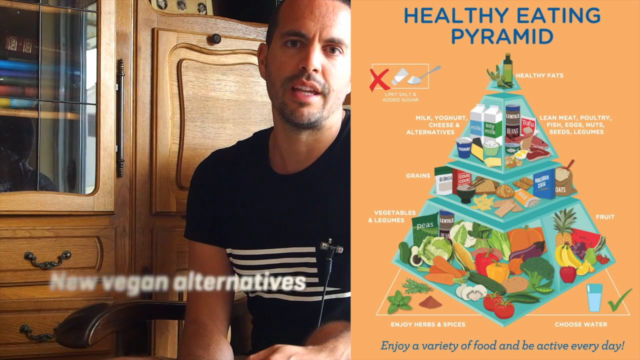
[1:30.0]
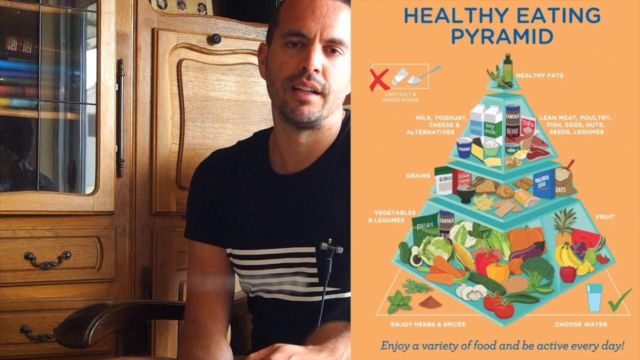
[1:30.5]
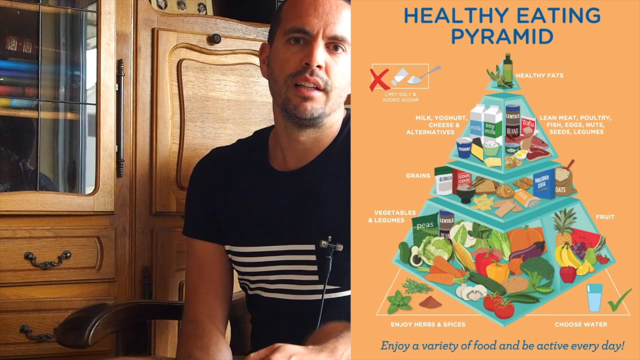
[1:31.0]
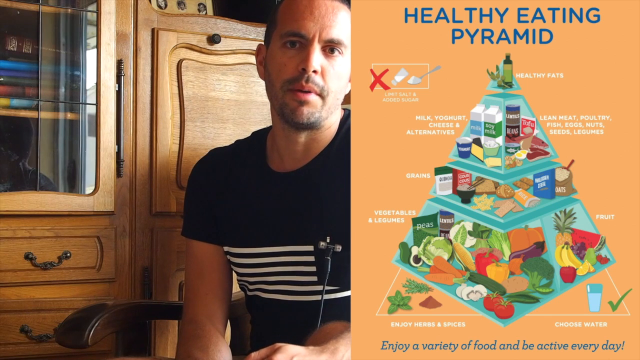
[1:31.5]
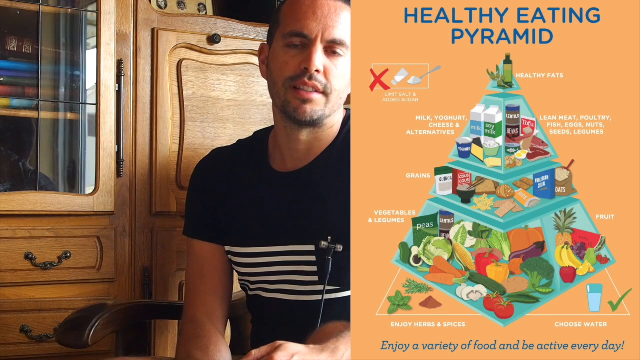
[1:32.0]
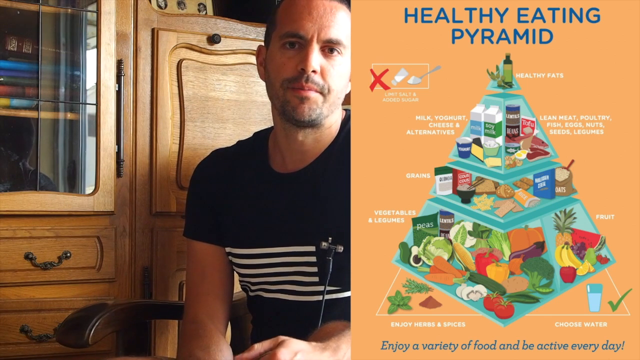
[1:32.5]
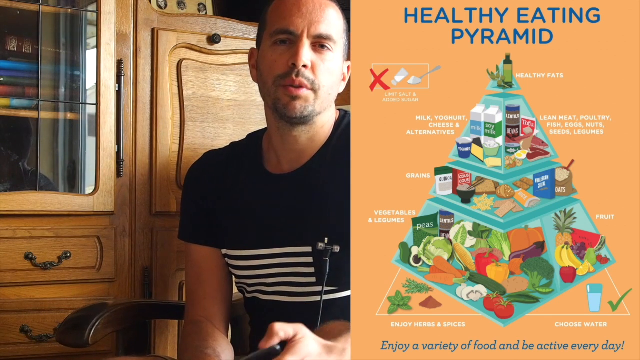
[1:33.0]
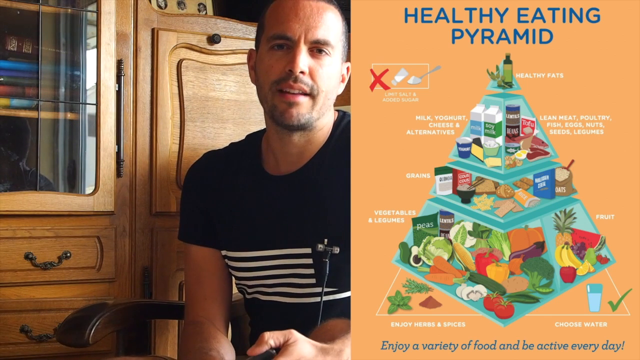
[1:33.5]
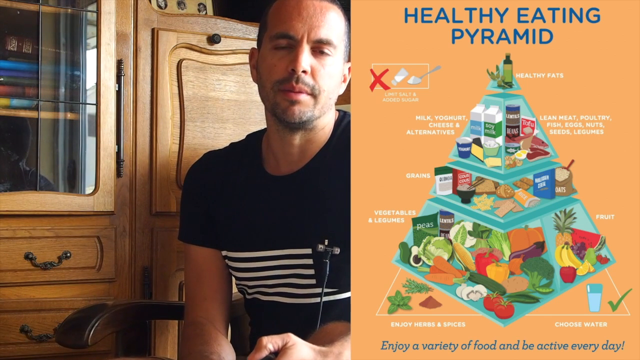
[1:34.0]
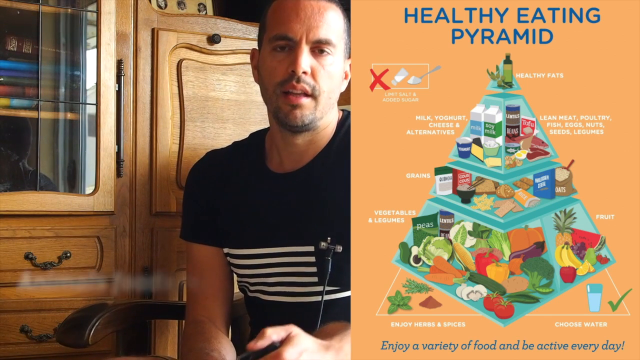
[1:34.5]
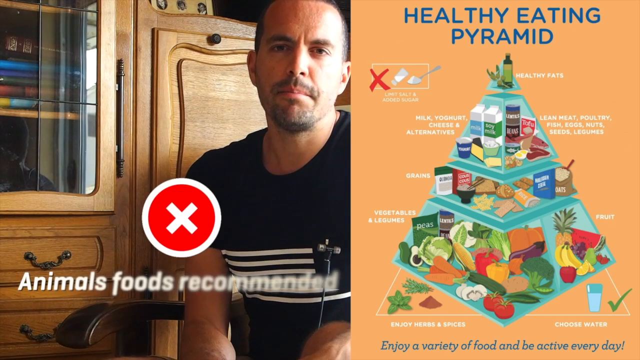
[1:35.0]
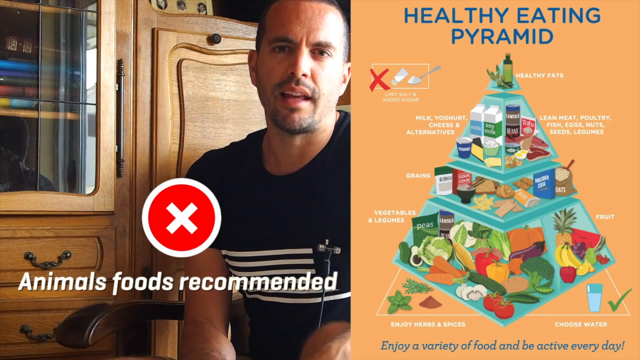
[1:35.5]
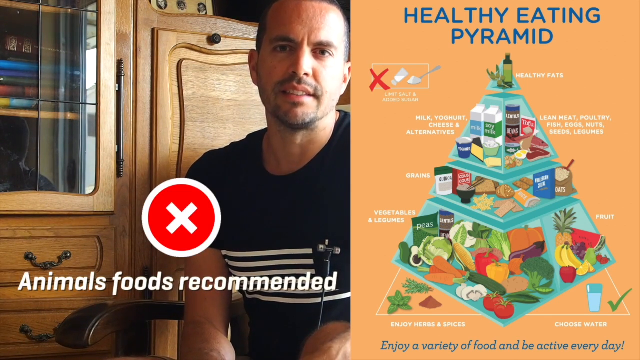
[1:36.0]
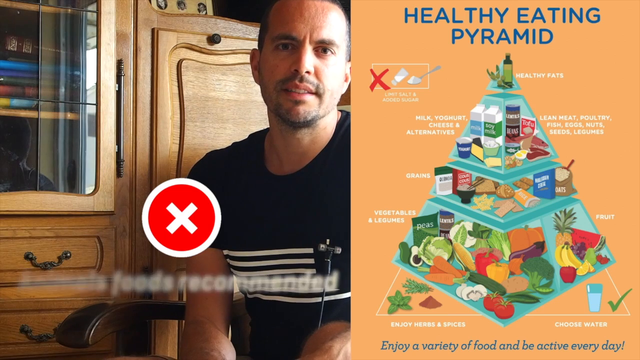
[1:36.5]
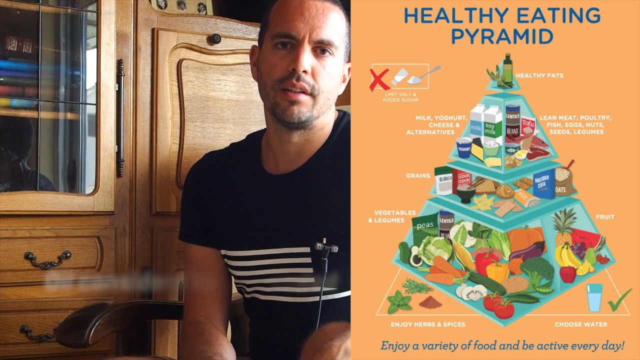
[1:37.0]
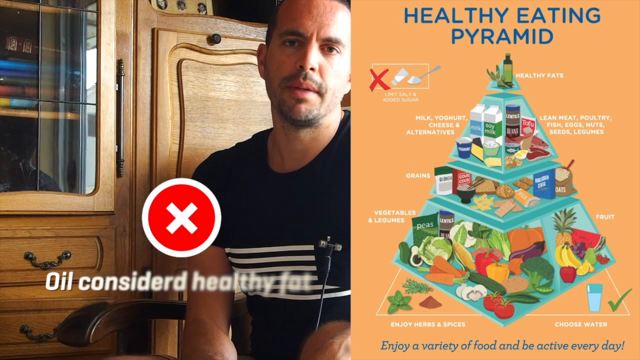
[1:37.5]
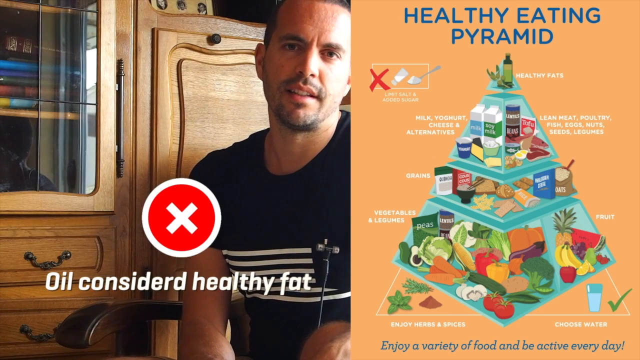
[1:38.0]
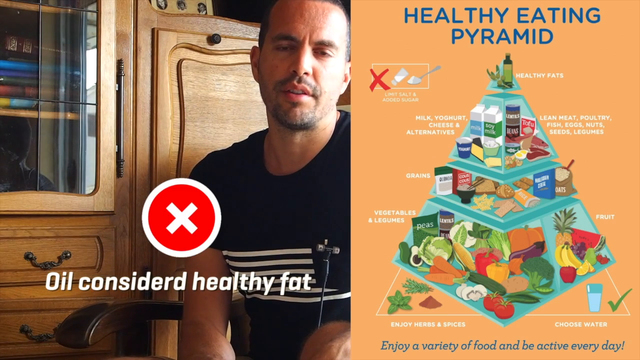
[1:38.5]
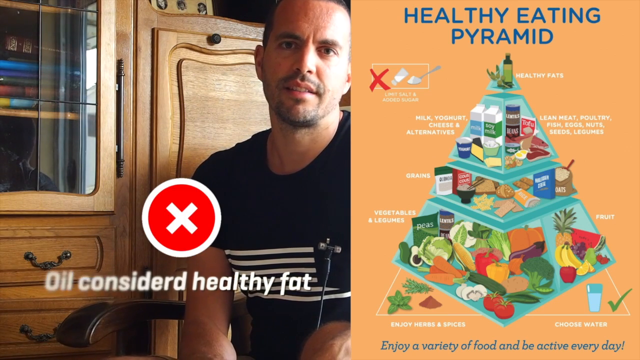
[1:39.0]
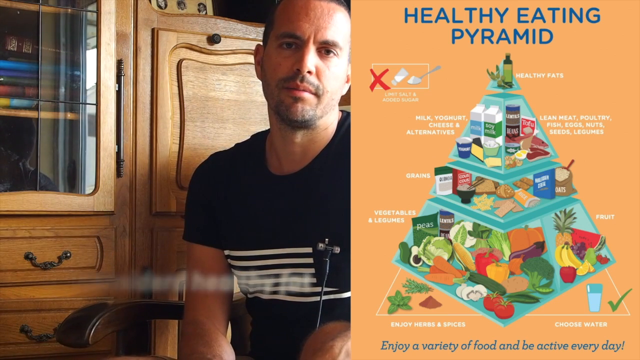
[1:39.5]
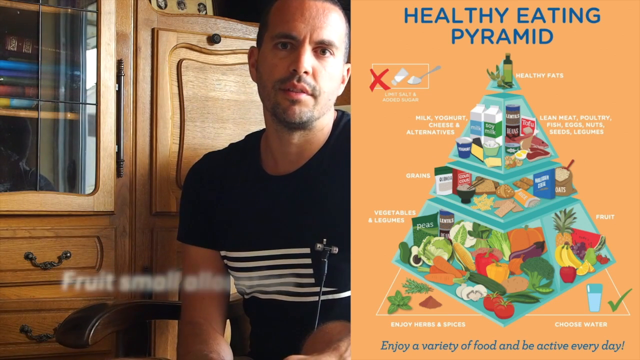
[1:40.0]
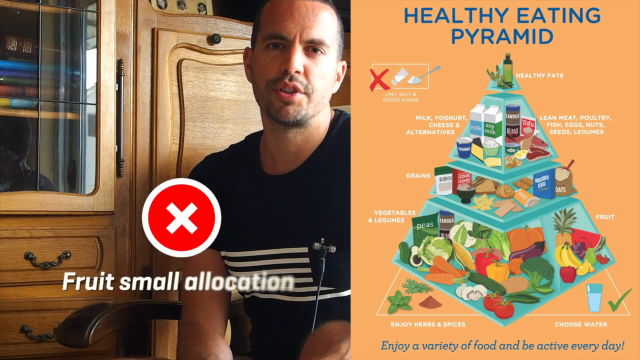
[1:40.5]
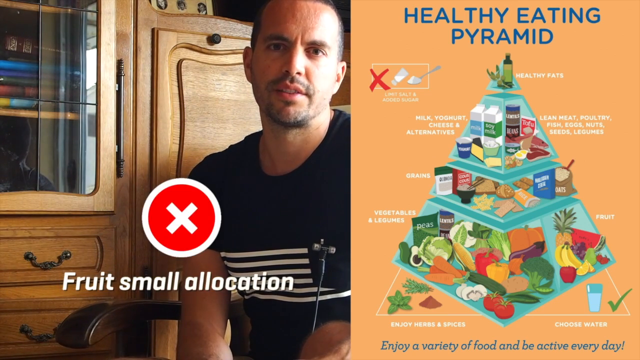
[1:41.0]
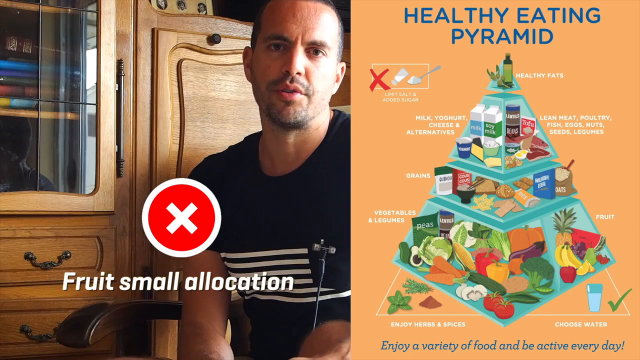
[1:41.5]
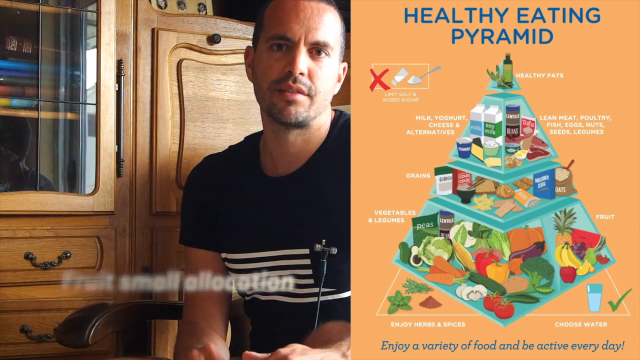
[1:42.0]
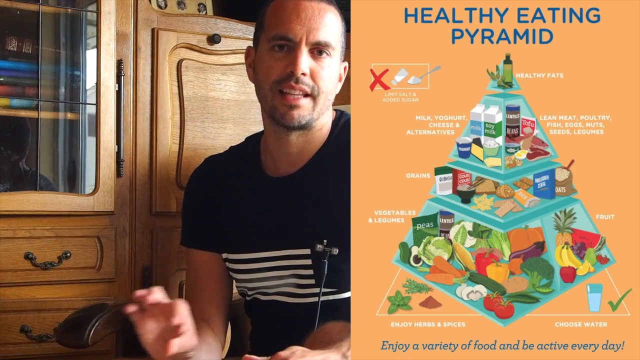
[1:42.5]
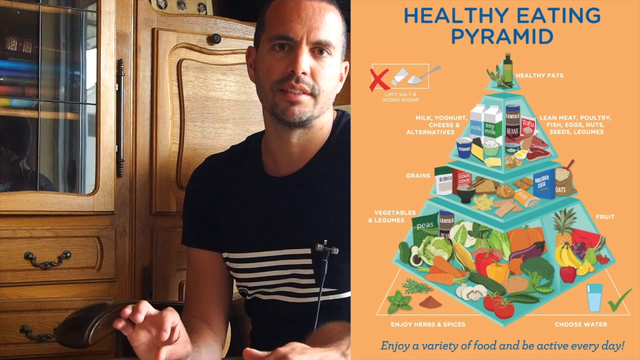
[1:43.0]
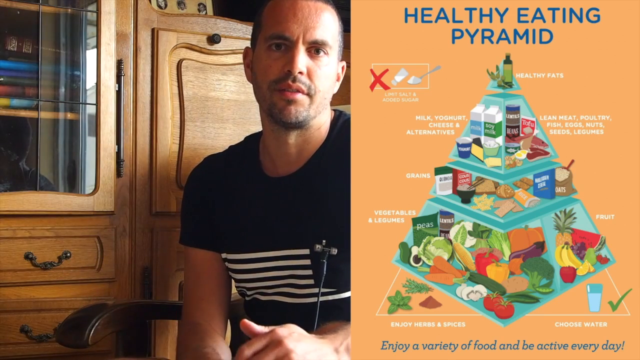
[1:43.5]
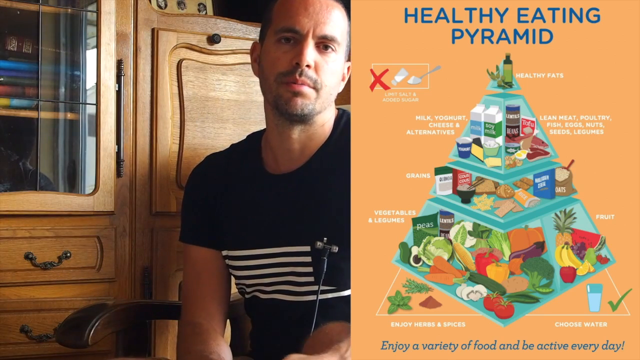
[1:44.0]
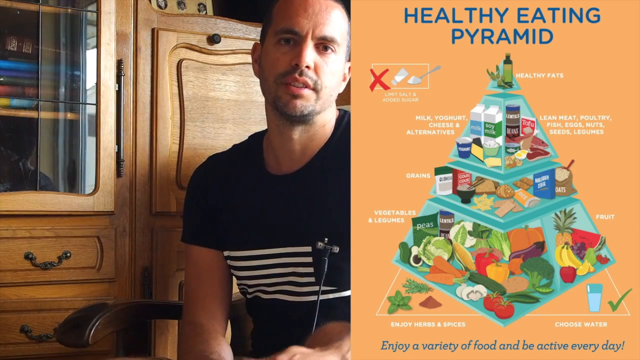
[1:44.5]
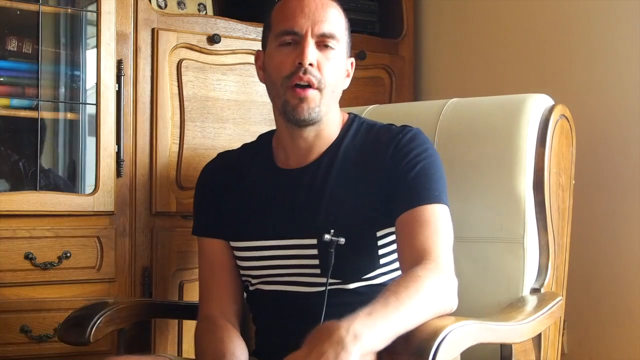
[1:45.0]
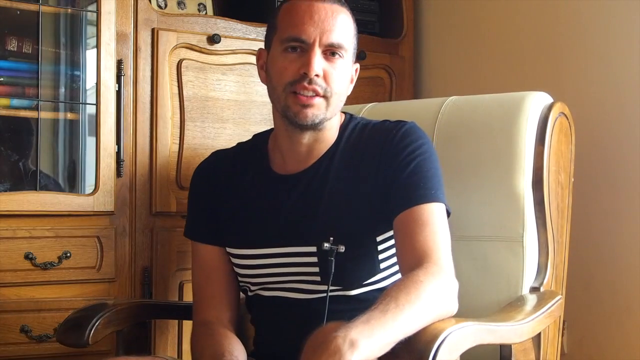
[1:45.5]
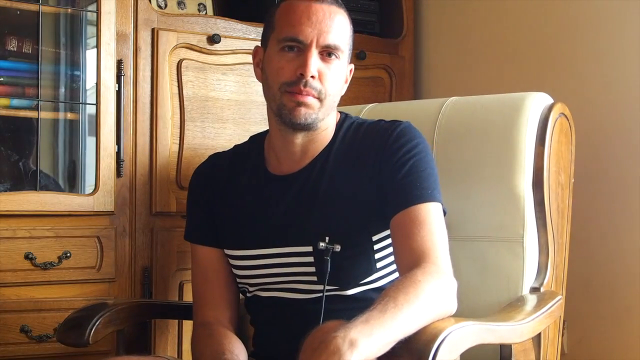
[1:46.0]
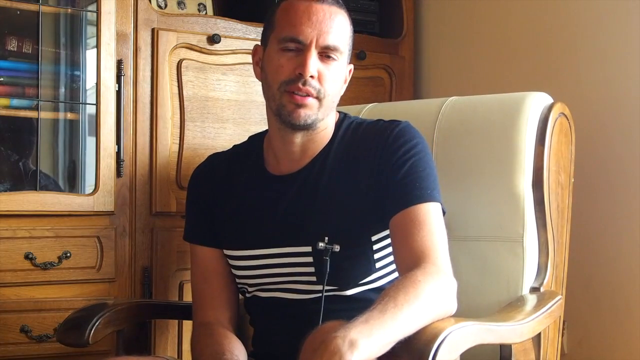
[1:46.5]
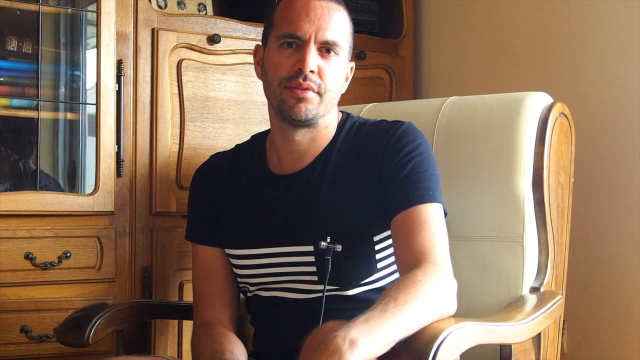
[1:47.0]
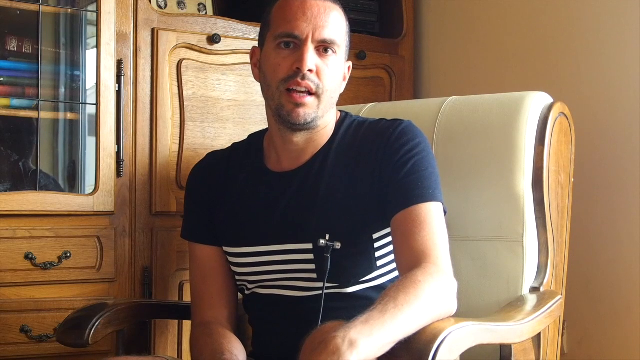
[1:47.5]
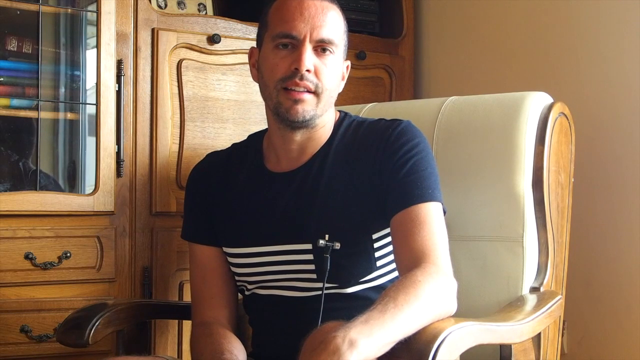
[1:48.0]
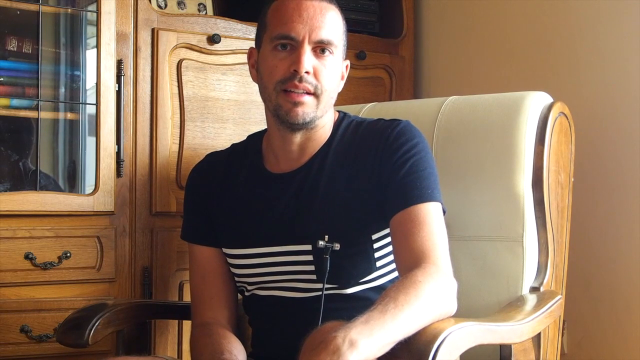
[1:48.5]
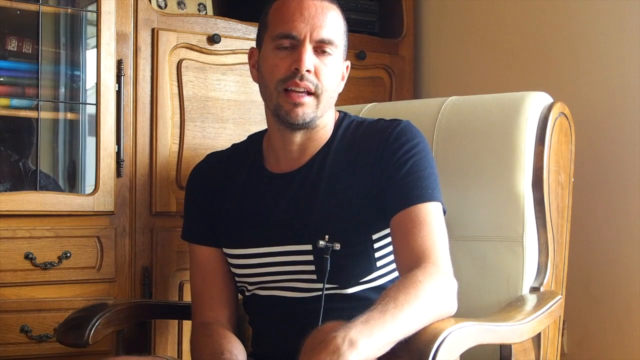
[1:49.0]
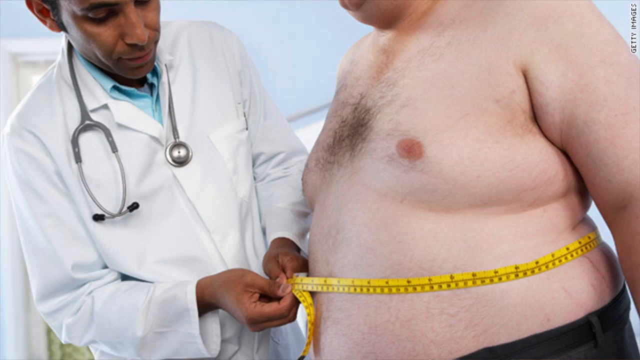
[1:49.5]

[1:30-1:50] The split screen continues: on the left is the man in the white chair, with a goatee, and the text "new vegan alternatives" at the bottom; on the right is the healthy eating pyramid, written in blue on a peach-colored background. "New vegan alternatives" fades away as the man continues to speak, and a red circle with a white border and a white X inside pops up, with "animals foods recommended" underneath. As that fades away, the red circle with the white X comes back with "oil considered healthy fat" underneath in white. That disappears, and the circle comes back with "fruit small allocation" underneath. The man continues to speak, and the view then becomes a full screen of the man, who continues to speak to the camera.